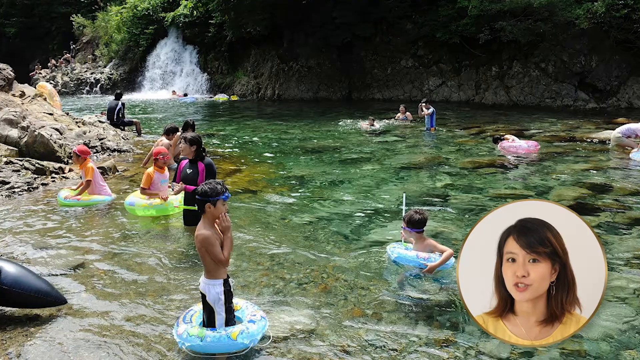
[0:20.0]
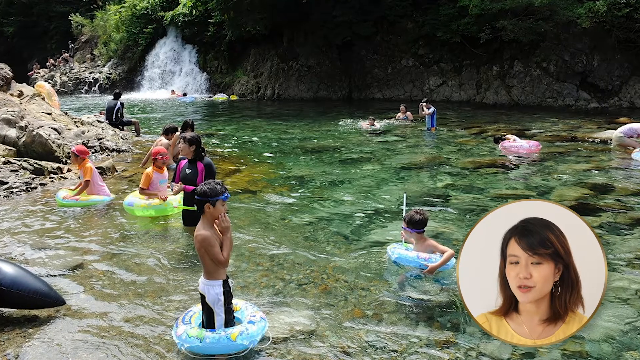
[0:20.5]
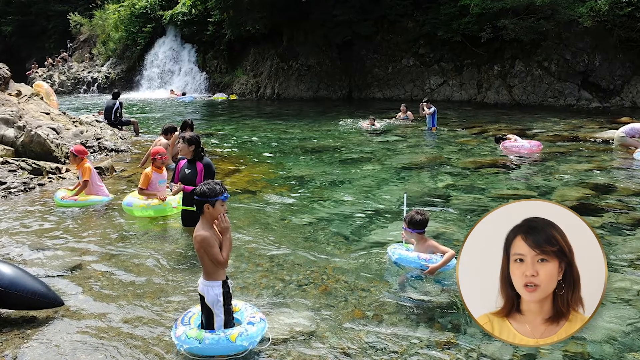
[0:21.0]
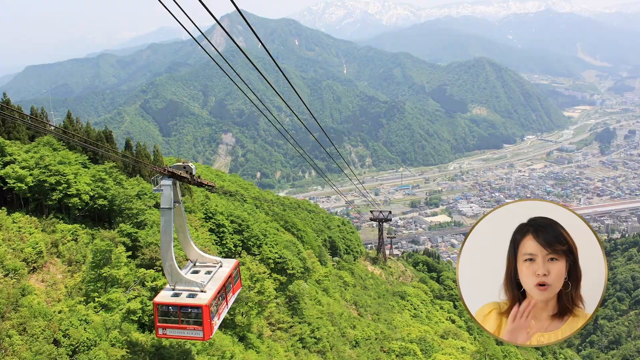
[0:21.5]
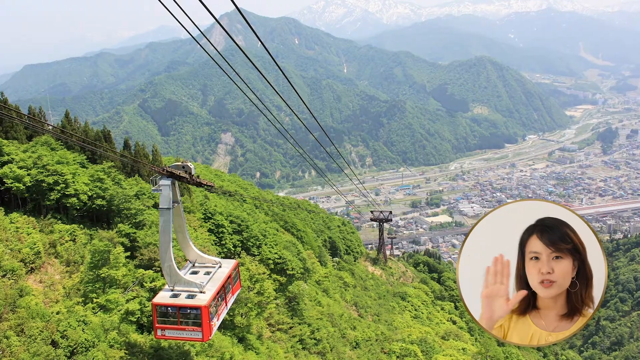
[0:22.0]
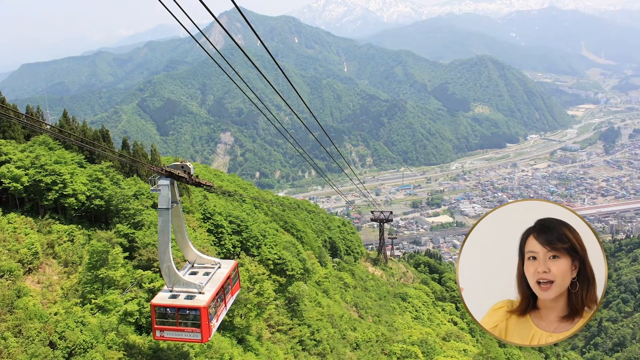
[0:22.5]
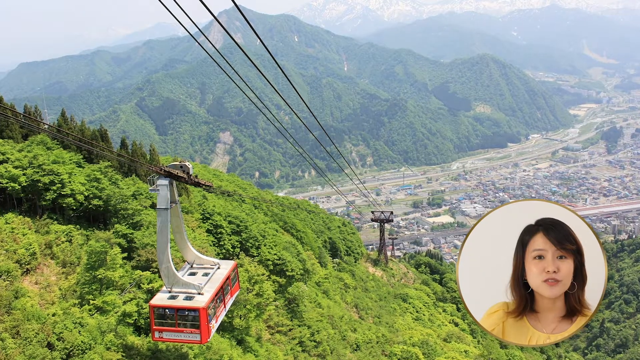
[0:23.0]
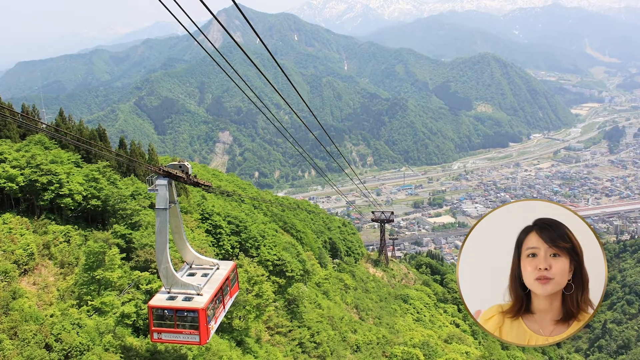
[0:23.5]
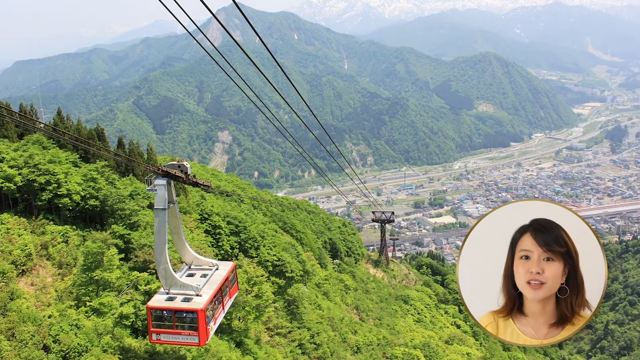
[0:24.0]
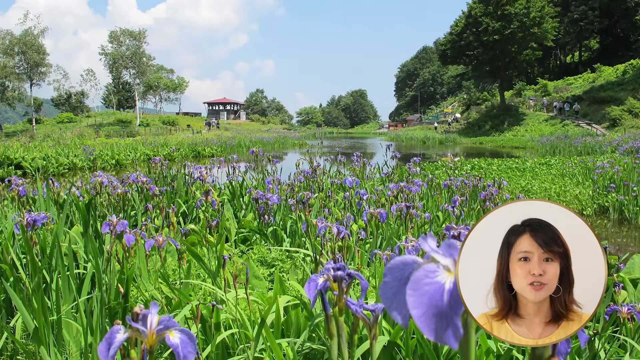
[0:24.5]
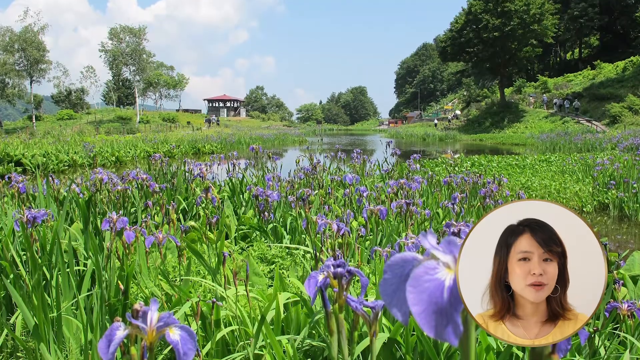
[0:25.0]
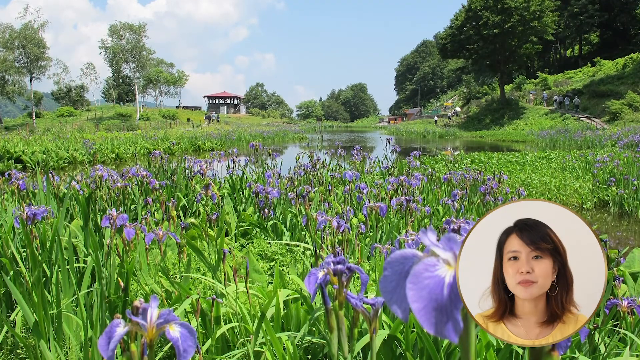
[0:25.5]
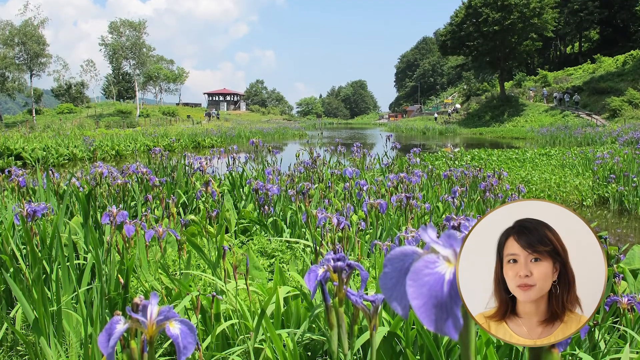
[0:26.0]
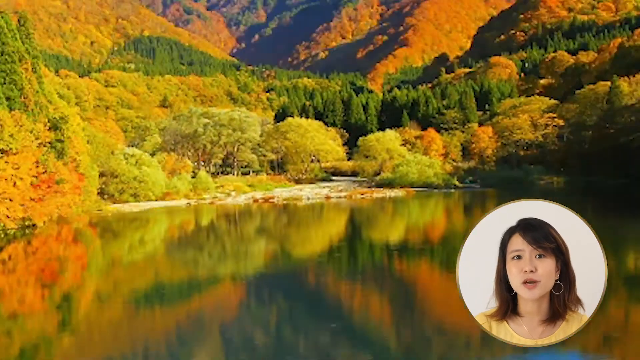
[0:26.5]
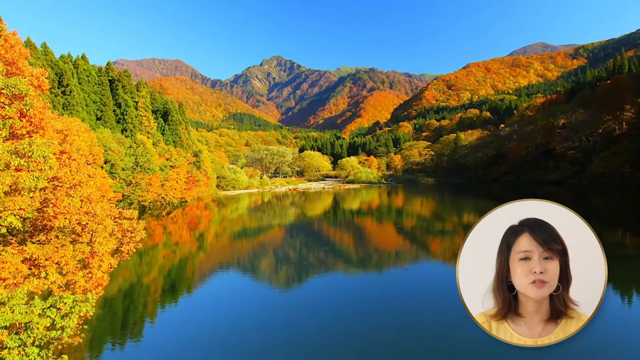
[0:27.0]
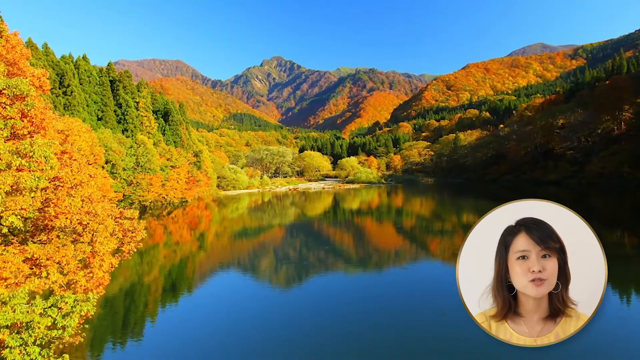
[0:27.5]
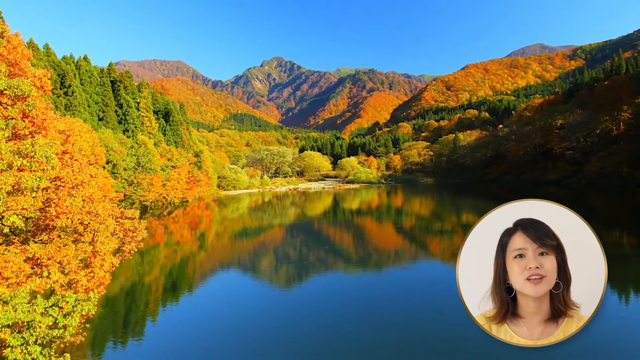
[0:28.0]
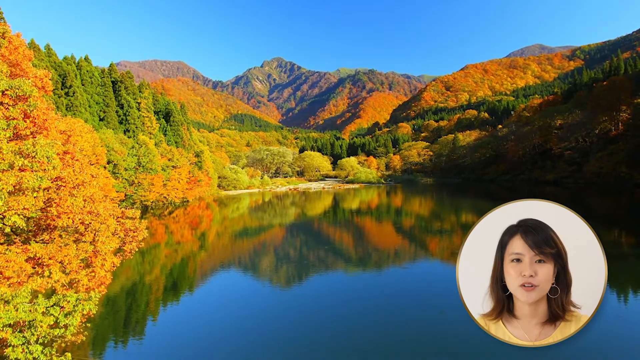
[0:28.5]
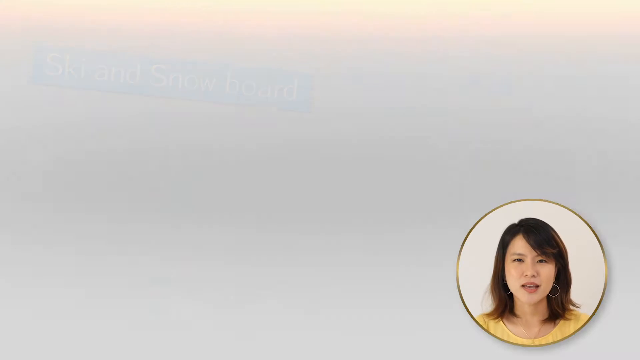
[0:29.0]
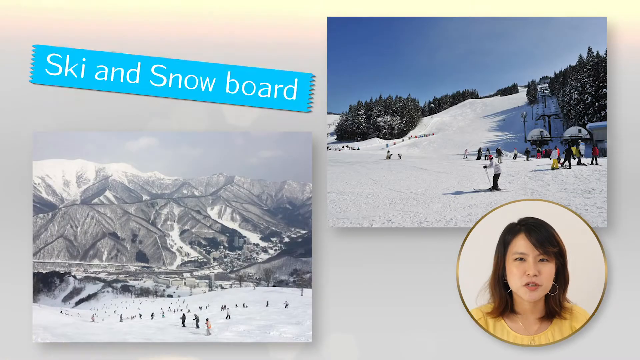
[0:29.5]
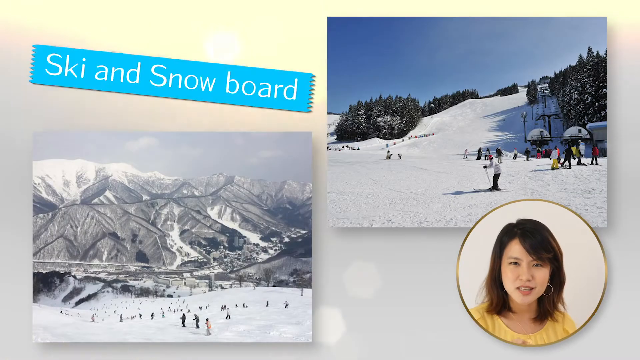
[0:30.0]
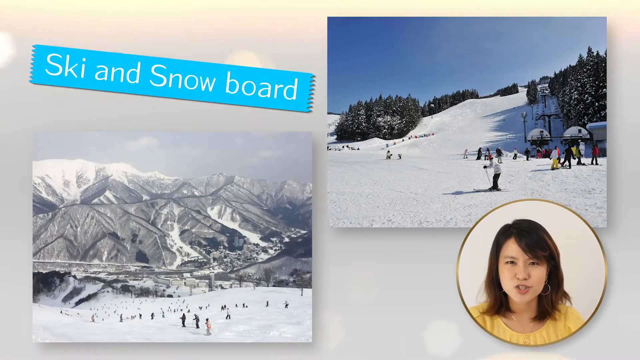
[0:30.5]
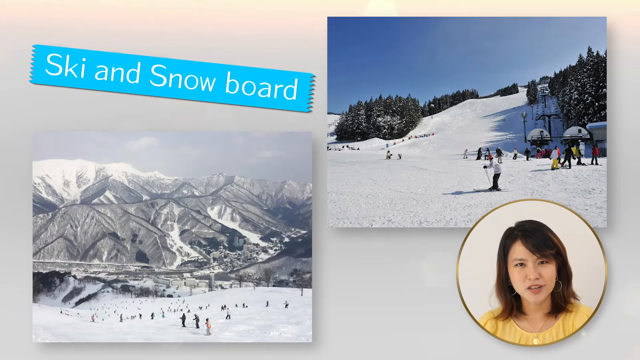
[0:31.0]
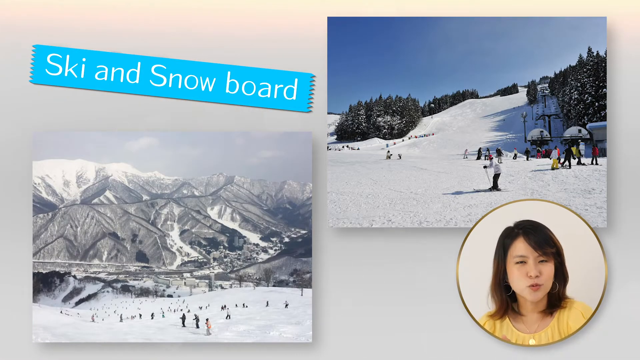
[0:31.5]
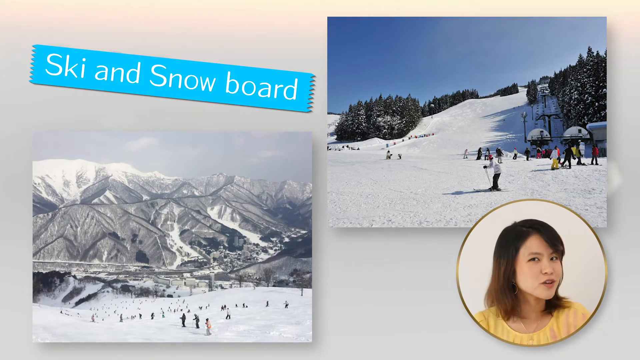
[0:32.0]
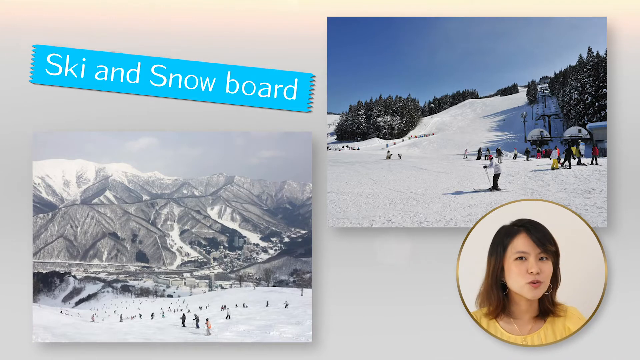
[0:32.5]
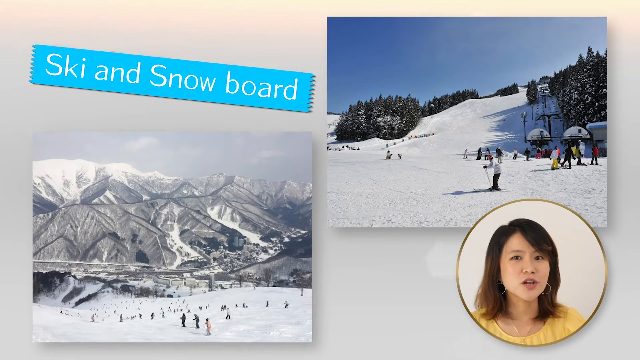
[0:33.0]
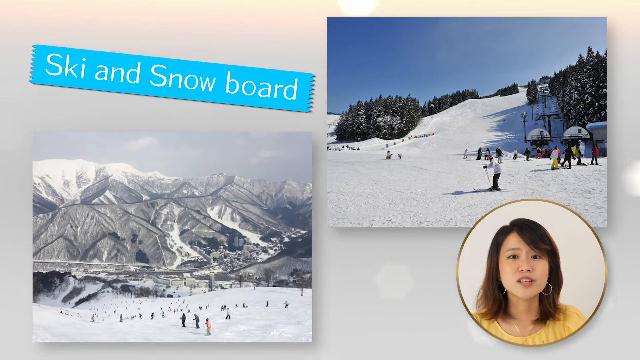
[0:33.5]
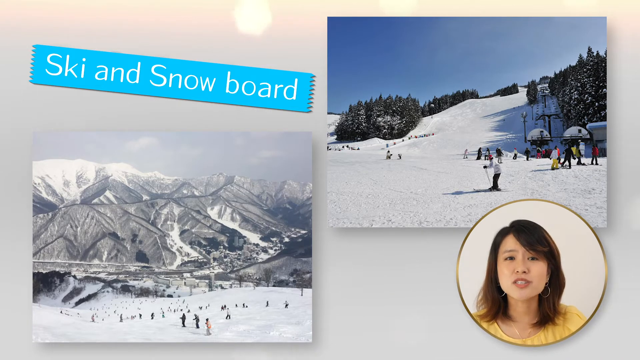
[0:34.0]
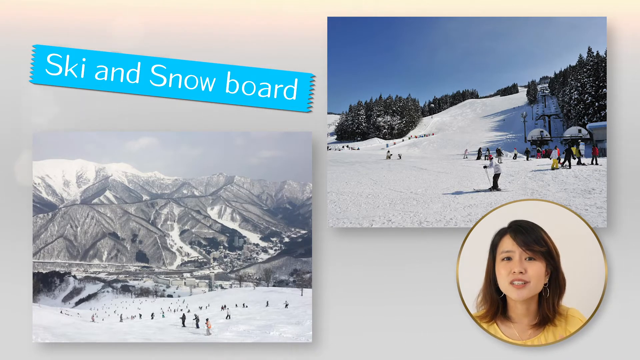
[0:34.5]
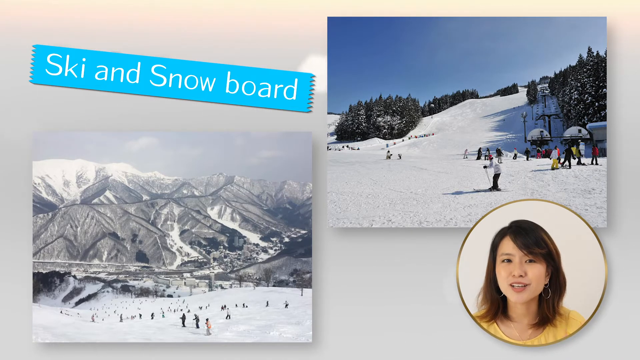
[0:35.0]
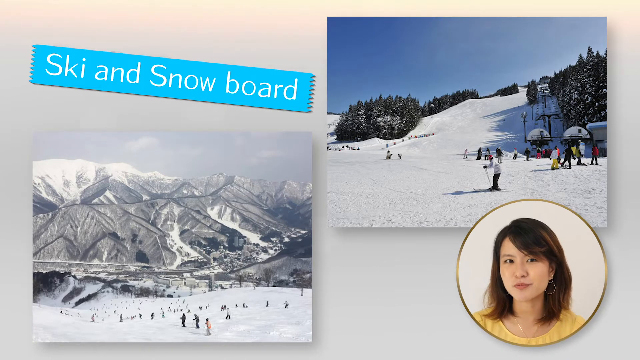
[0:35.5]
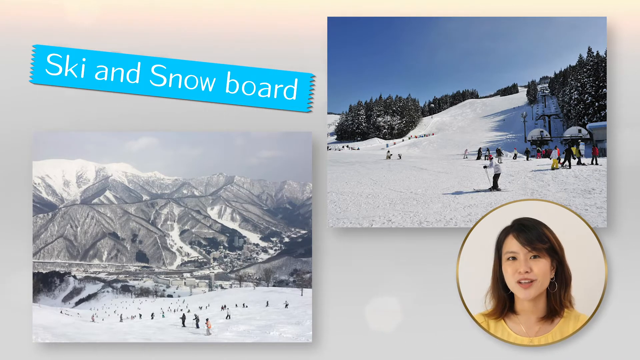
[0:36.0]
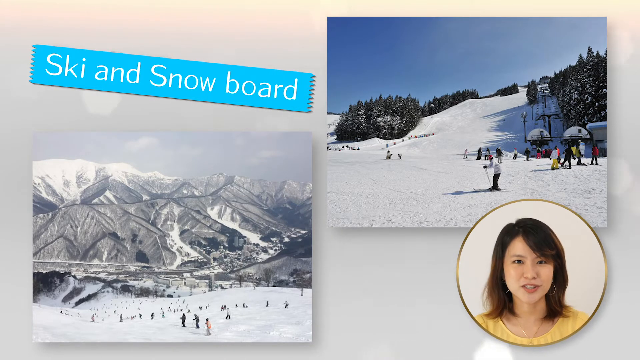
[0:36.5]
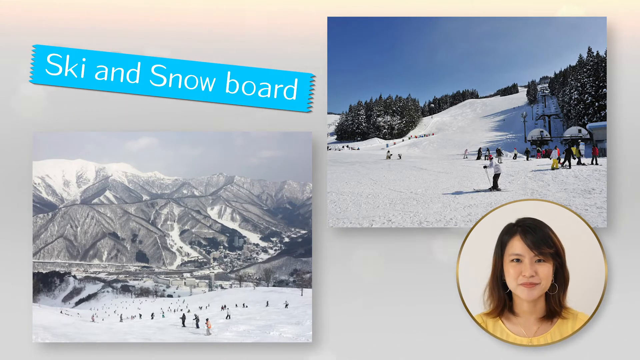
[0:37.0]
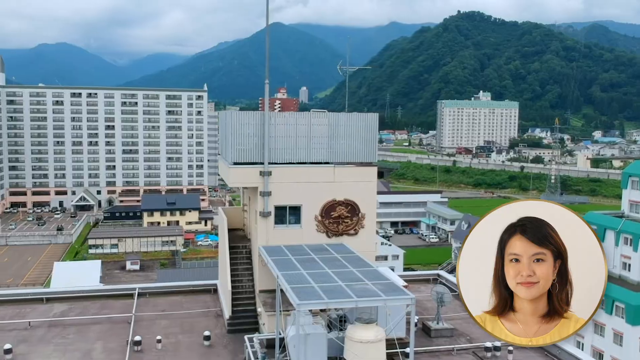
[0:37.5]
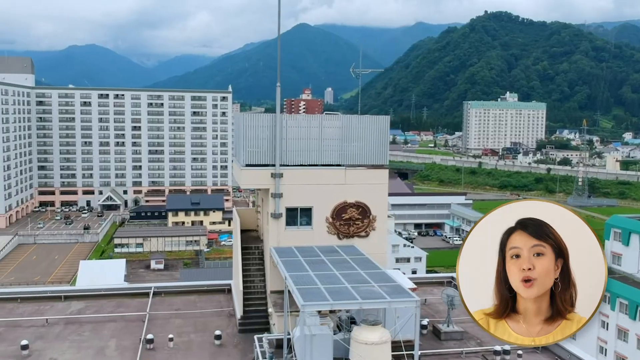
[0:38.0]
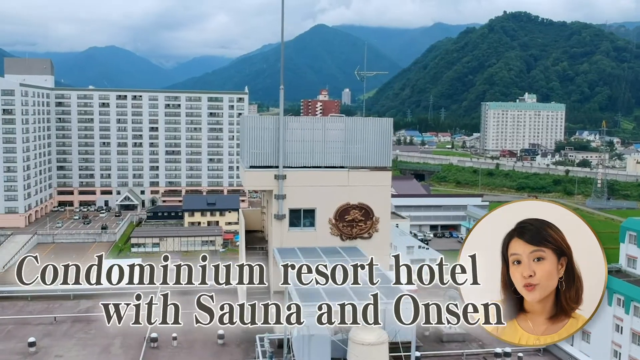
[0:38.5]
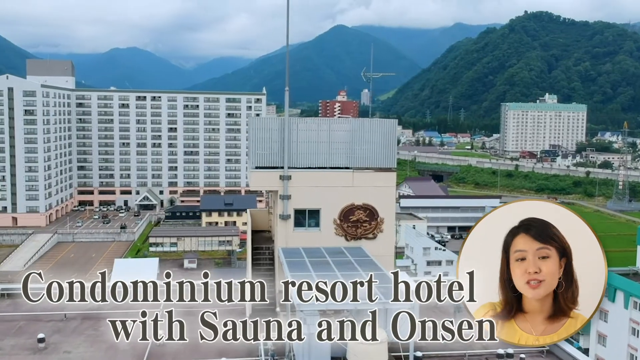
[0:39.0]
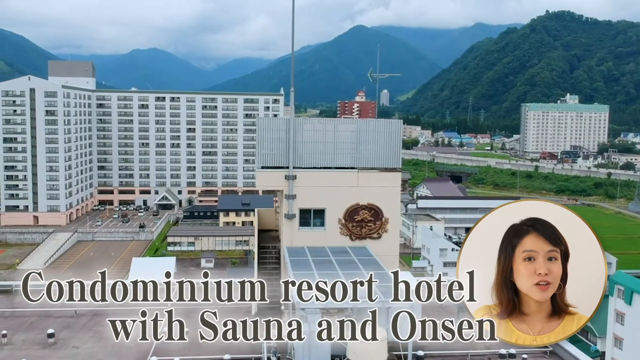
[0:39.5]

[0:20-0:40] The same woman narrates as different scenes of different types of landscape, apparently around the same resort area, are shown, along with winter activities like skiing and snowboarding. One of the snow skiing shots shows a mountain range. Text reads "Condominium resort hotel." People with inner tubes are in a river with a small waterfall, apparently in summertime, enjoying the water. There is something like a chairlift or a gondola. The surrounding area is shown, including fields with wildflowers, in what looks like a very mountainous region. A large lake appears, looking like autumn, with colored leaves on the trees.